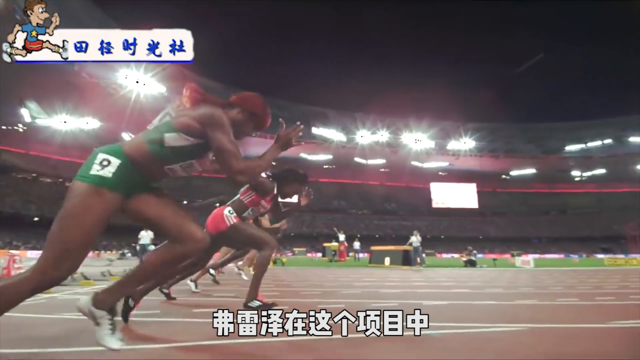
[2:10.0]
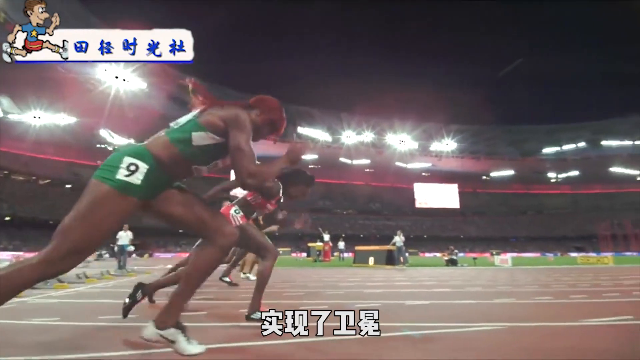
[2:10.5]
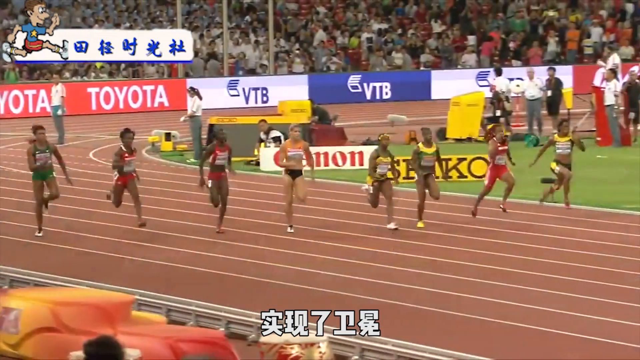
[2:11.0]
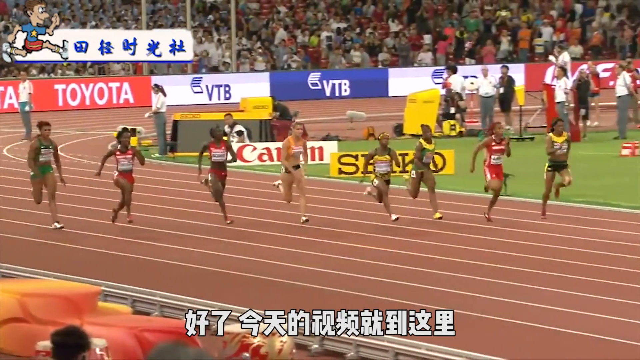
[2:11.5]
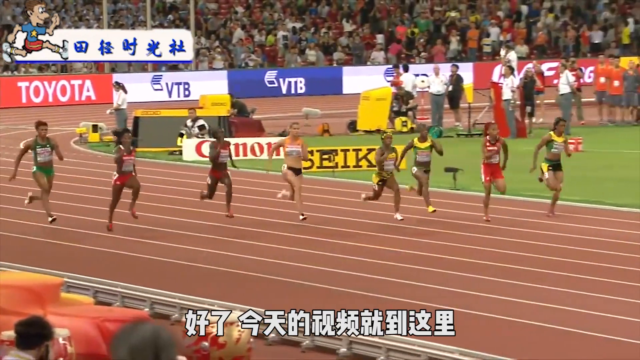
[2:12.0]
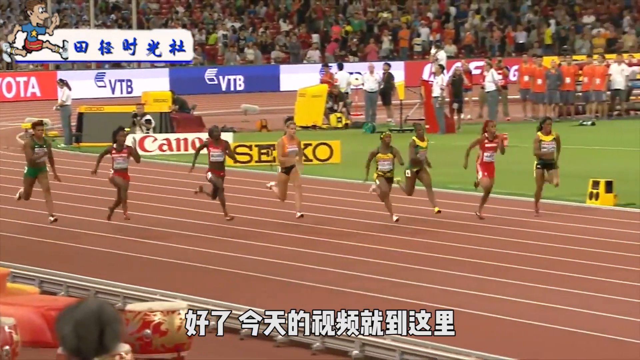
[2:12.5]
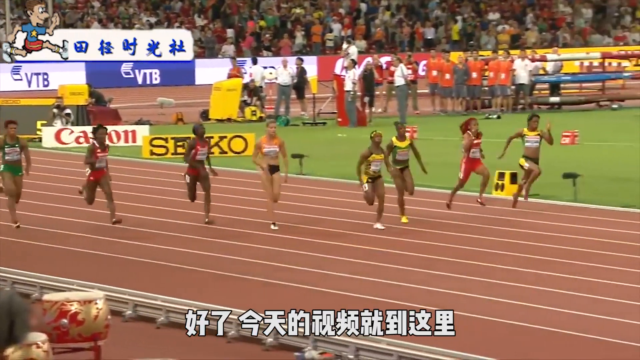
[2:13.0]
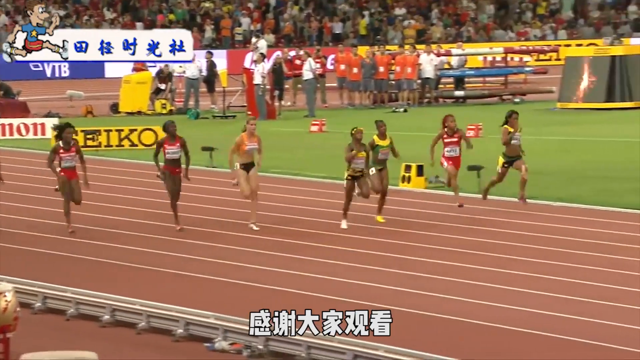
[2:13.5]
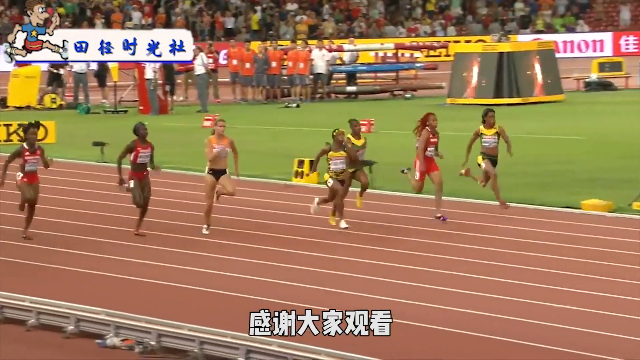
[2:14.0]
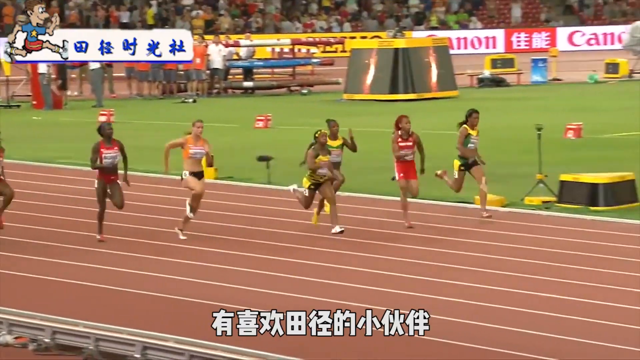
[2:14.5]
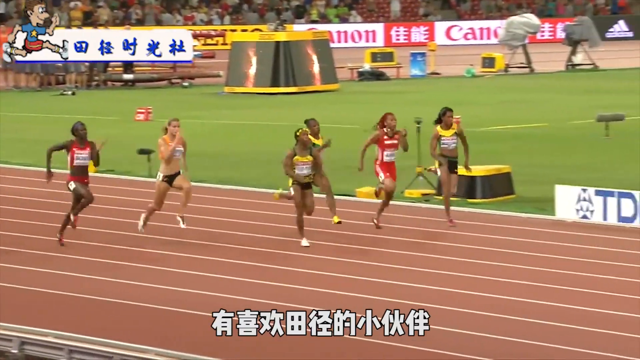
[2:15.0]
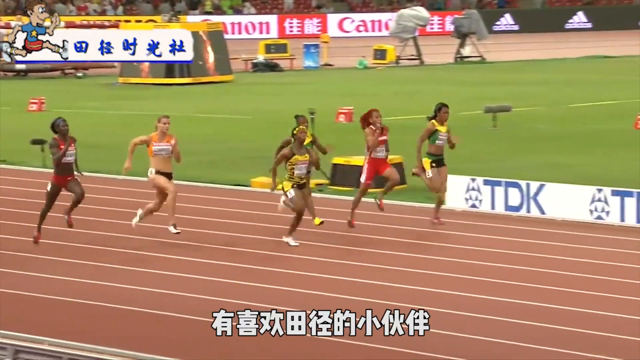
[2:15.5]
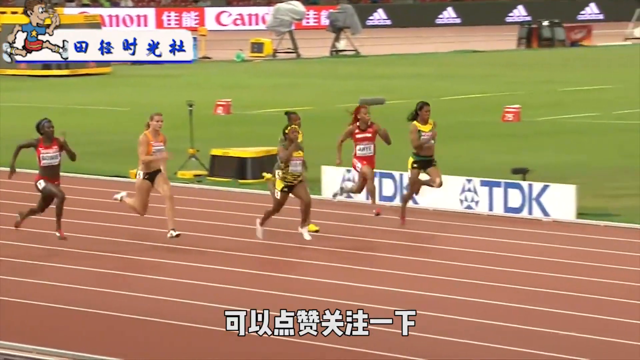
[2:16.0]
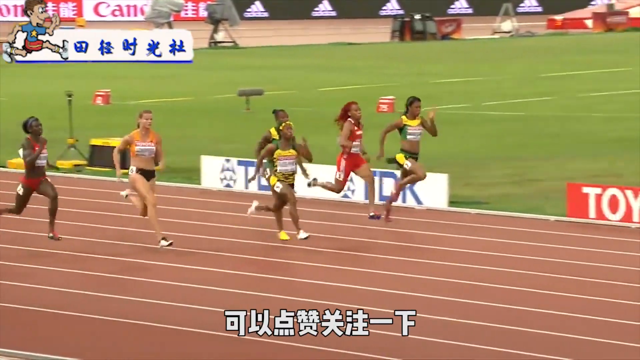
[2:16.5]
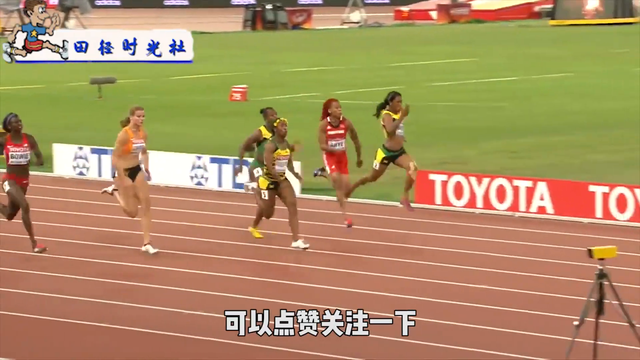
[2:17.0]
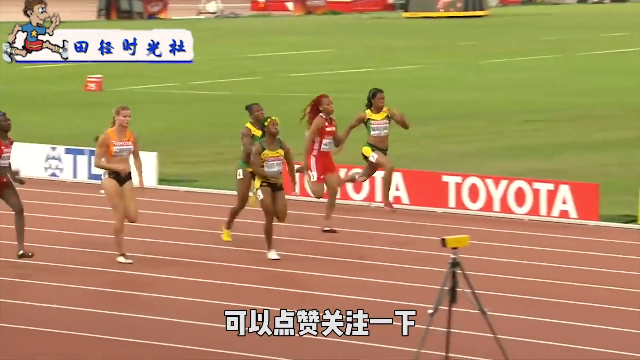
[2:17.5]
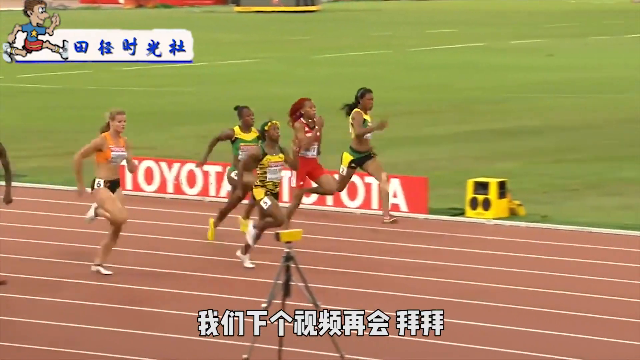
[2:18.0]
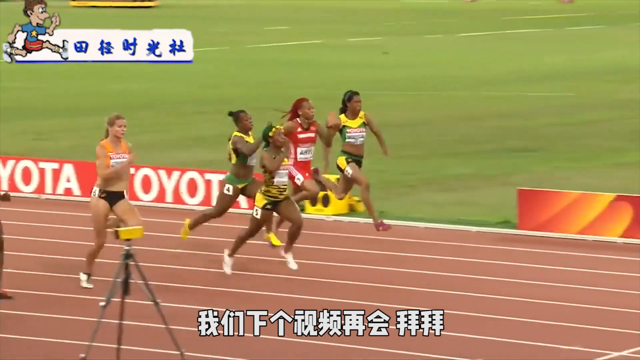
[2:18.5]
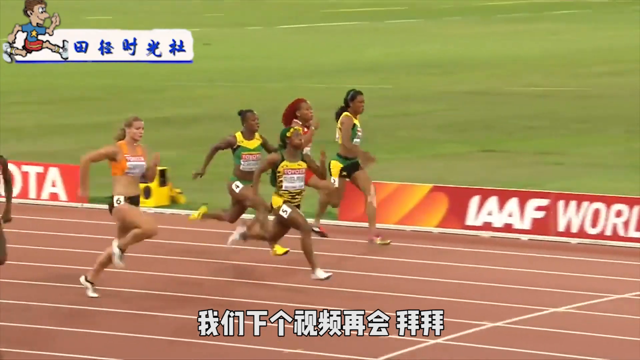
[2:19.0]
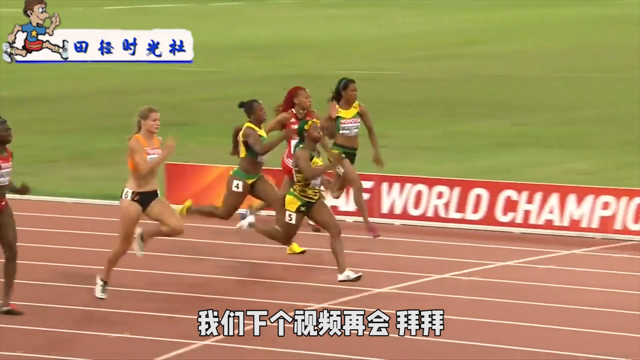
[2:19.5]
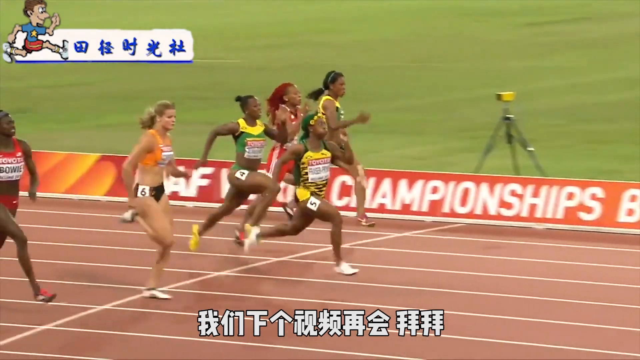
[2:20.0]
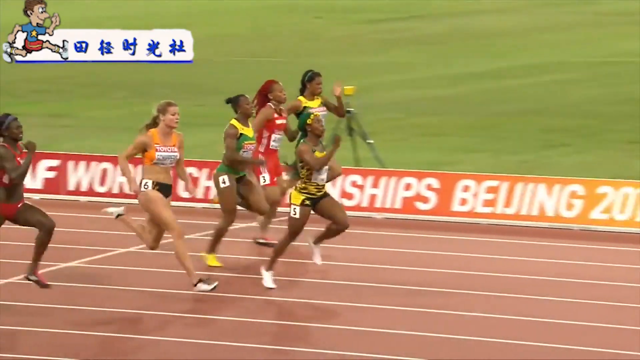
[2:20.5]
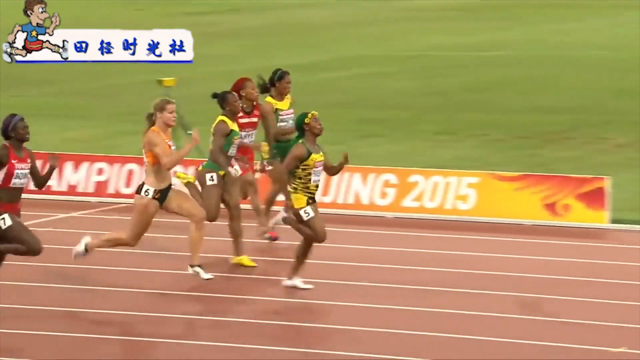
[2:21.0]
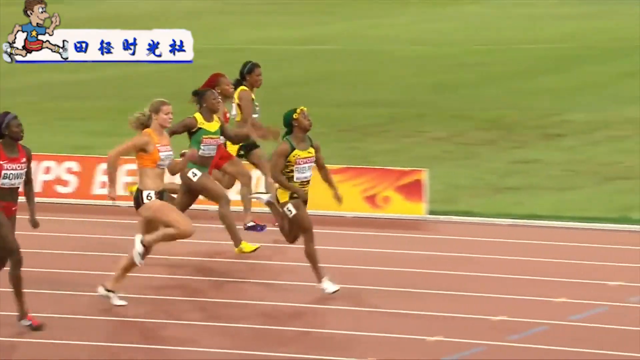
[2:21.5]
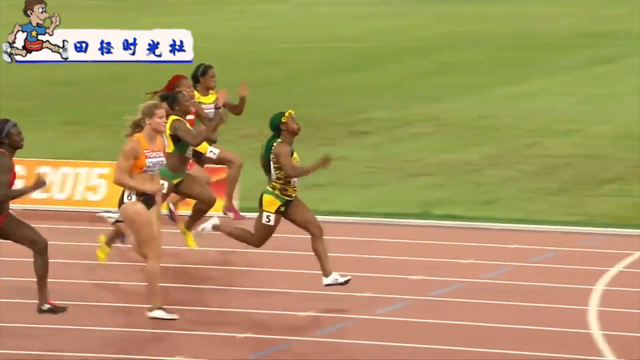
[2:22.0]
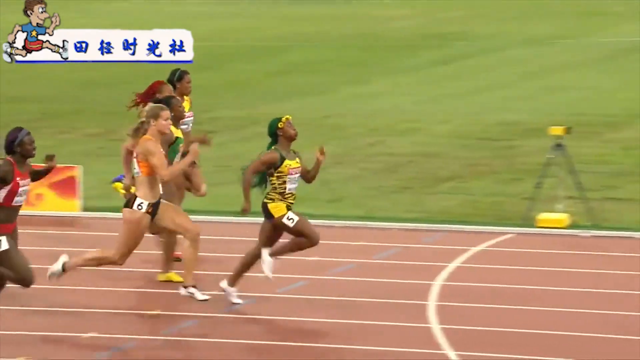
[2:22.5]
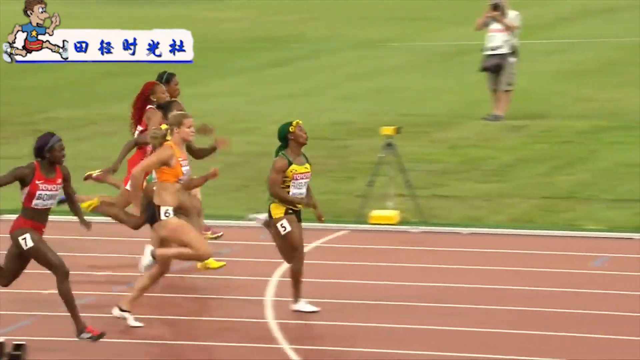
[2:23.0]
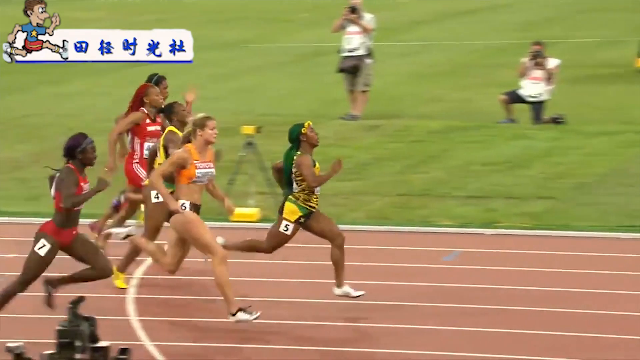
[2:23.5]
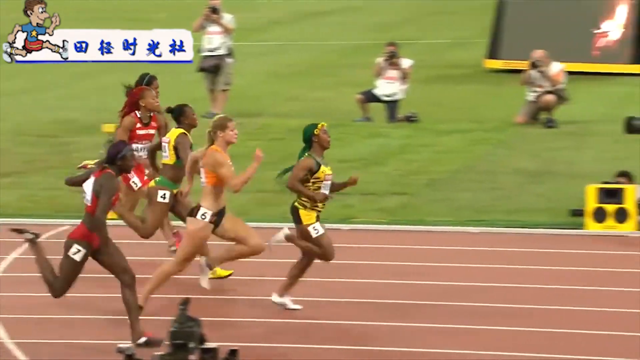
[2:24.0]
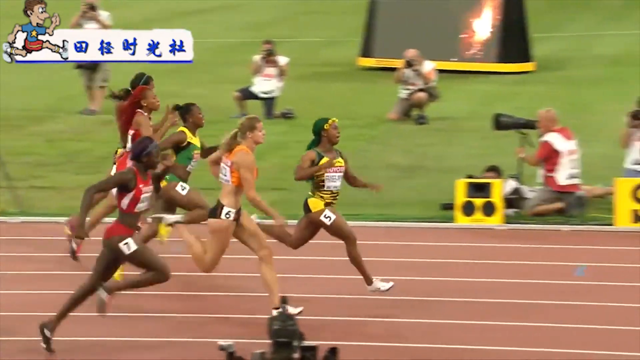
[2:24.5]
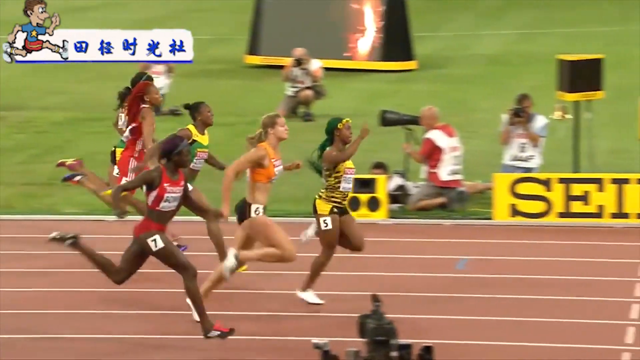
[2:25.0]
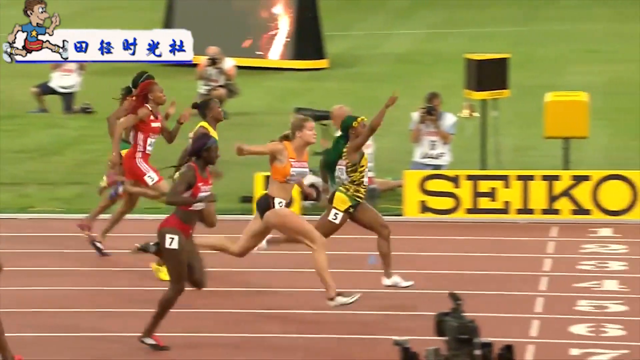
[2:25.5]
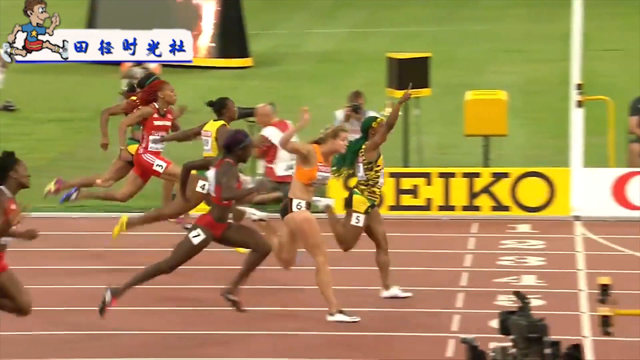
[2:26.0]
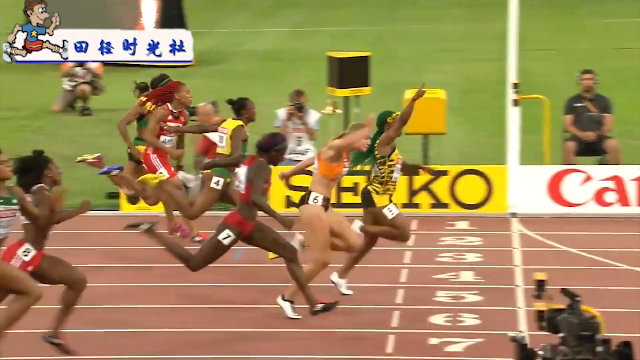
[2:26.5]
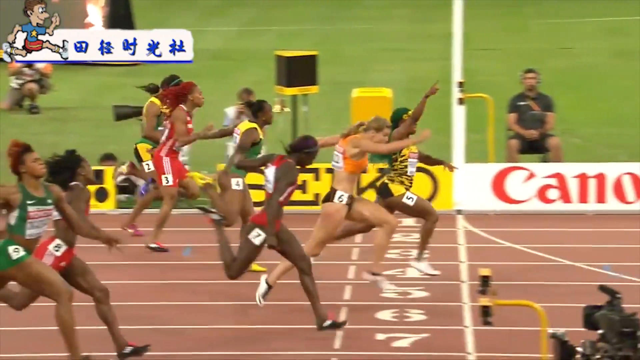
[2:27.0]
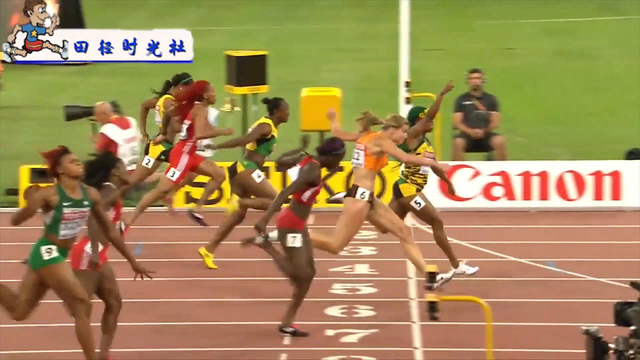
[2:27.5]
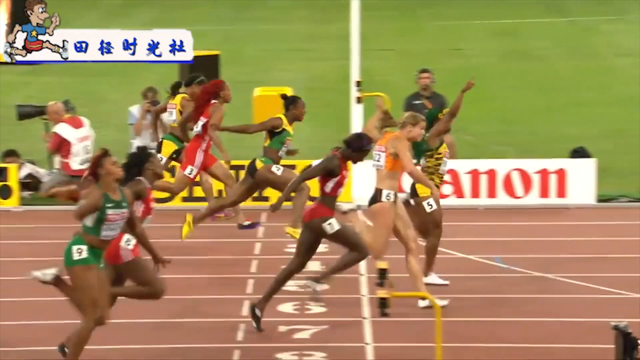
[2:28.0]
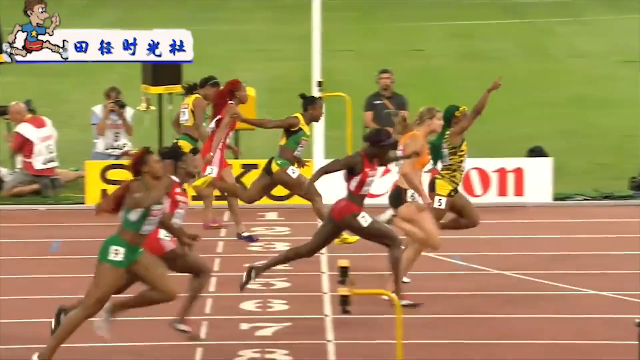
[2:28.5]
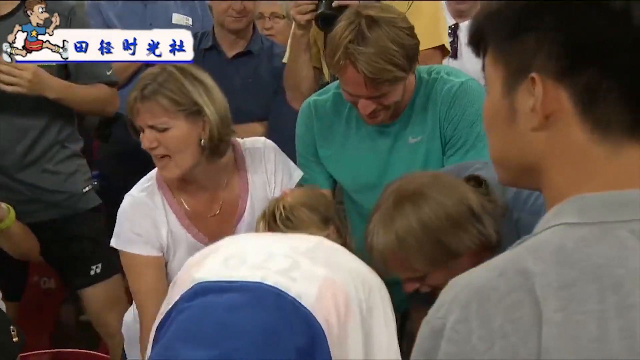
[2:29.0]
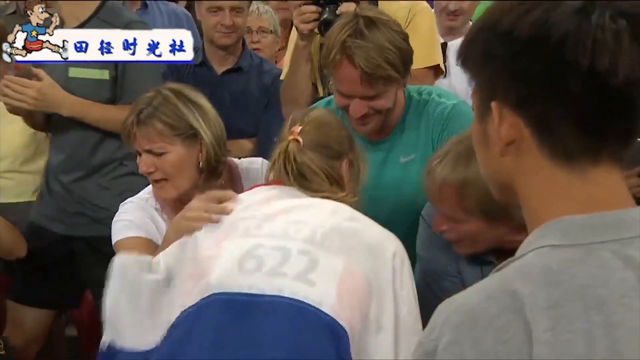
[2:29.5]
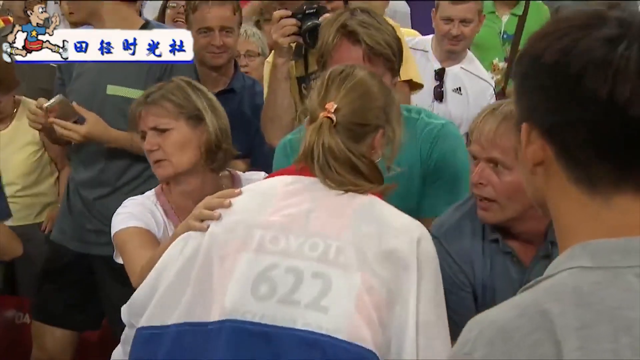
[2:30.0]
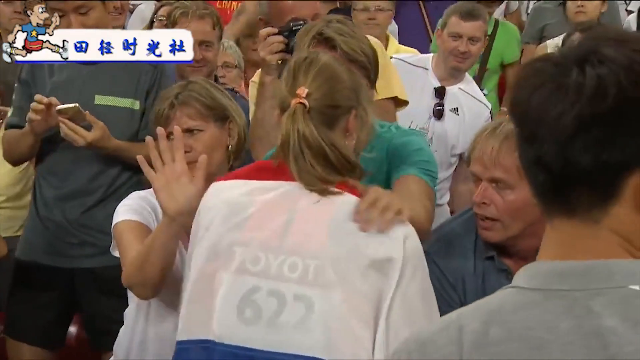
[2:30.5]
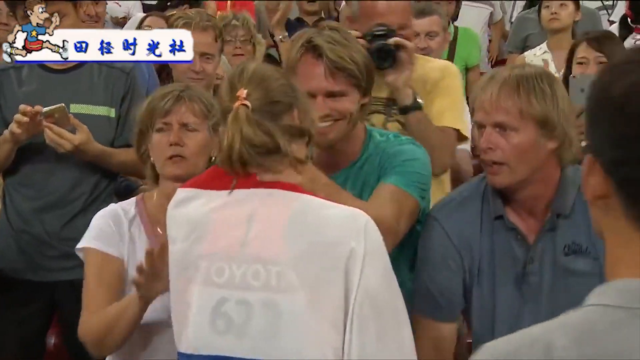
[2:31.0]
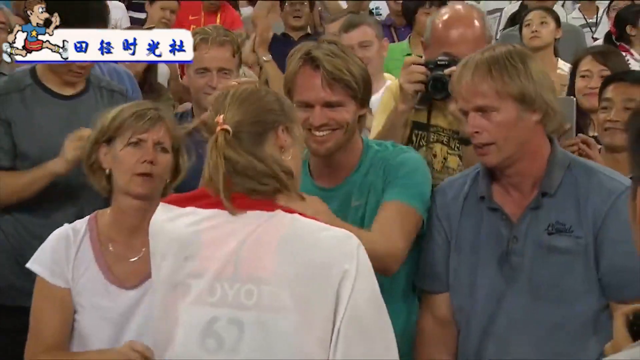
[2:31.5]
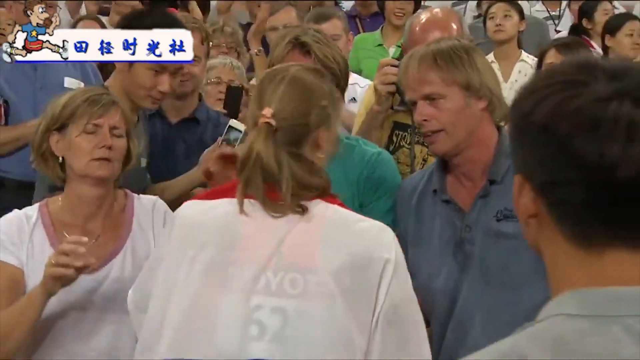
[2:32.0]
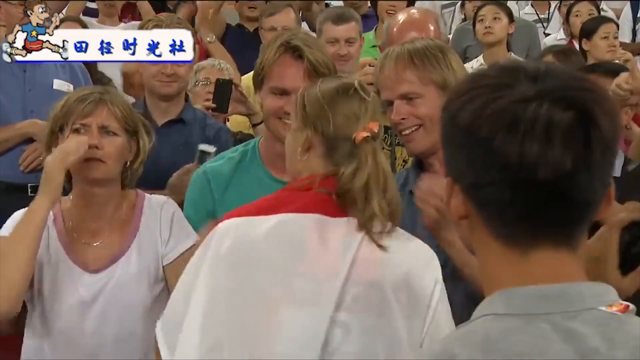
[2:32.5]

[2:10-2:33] The race is shown from different perspectives, including some earlier angles and then one shot from the side rather than from behind or head on. In slow motion, the competitors are seen bunched very close together toward the end. About halfway through, the eventual winner leads, but not by much; the woman who came second is probably a good five yards behind her, but she is taller and her longer stride covers ground more quickly than the winner's shorter stride. The taller woman quickly makes up ground, and it looks like the eventual winner might slow down a pace as she nears the finish line.